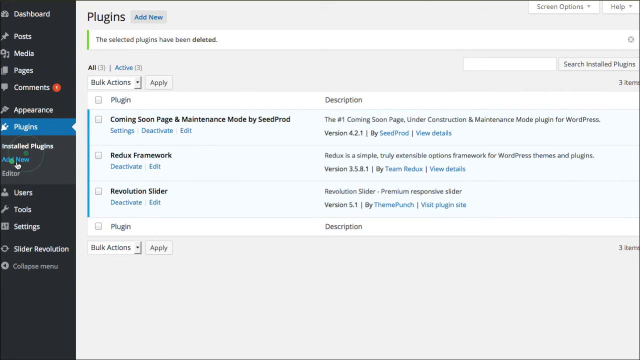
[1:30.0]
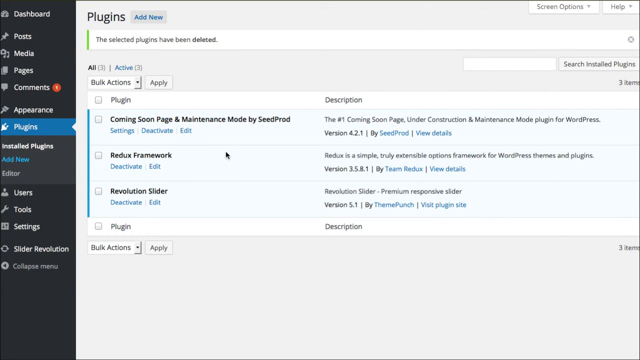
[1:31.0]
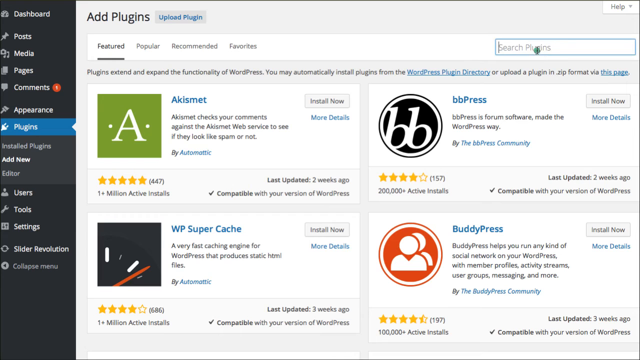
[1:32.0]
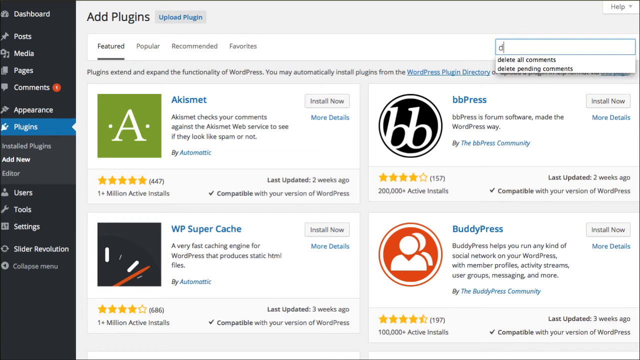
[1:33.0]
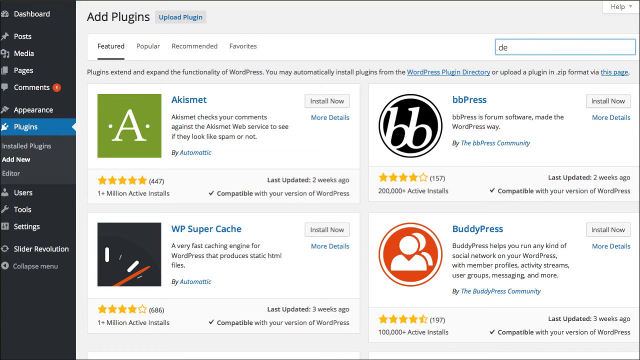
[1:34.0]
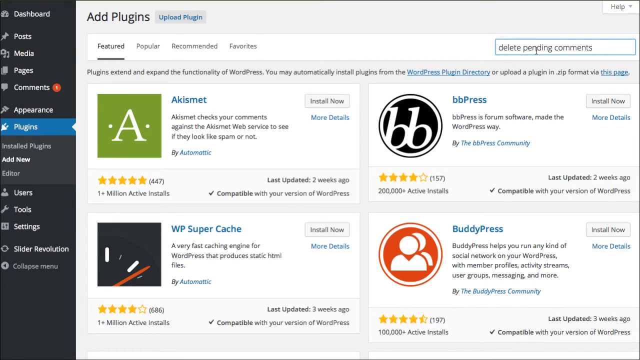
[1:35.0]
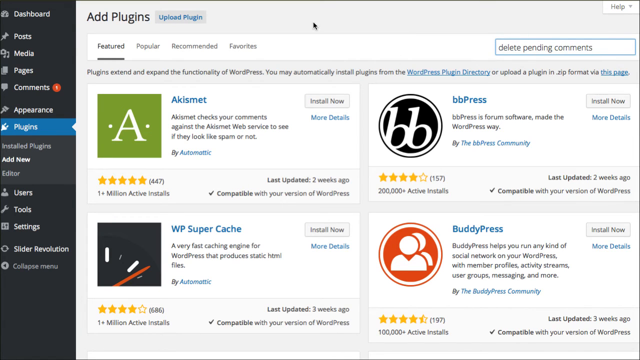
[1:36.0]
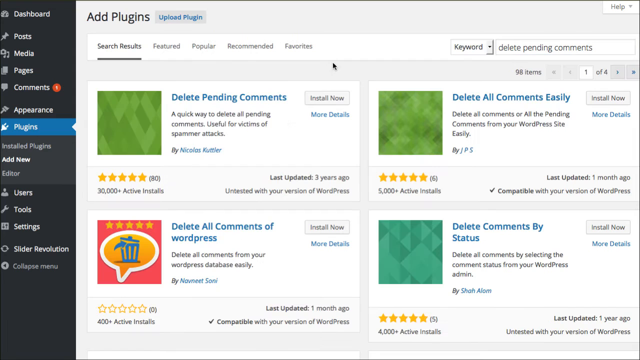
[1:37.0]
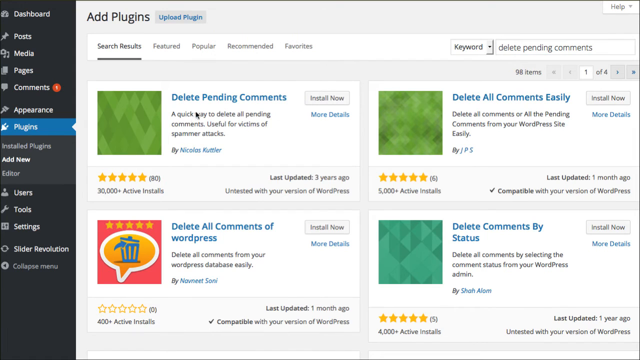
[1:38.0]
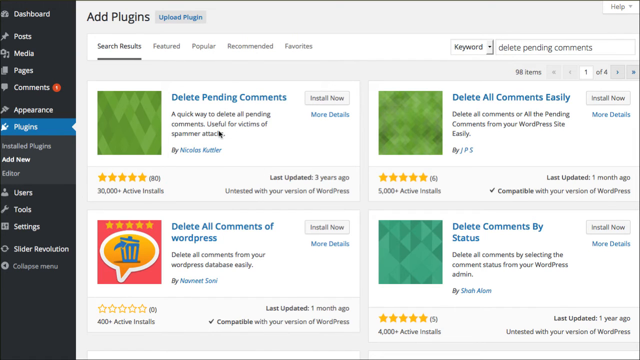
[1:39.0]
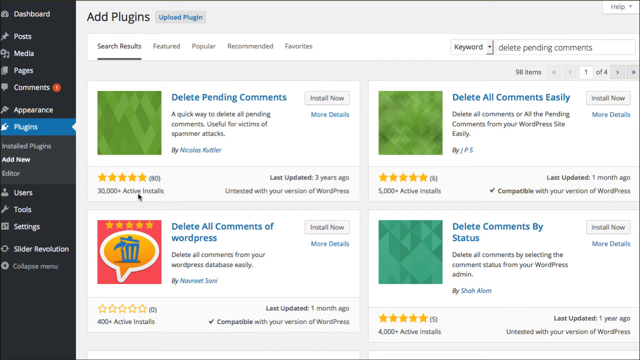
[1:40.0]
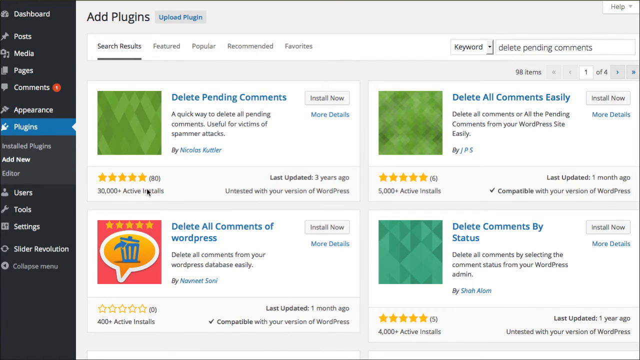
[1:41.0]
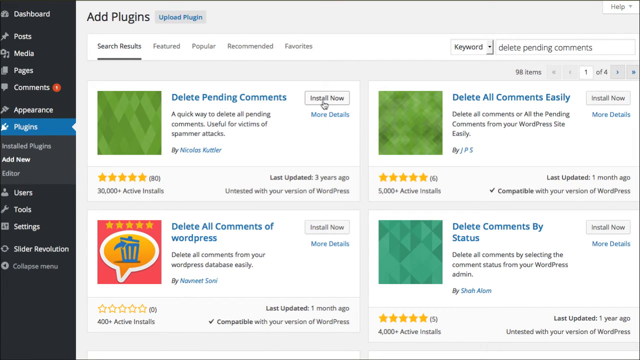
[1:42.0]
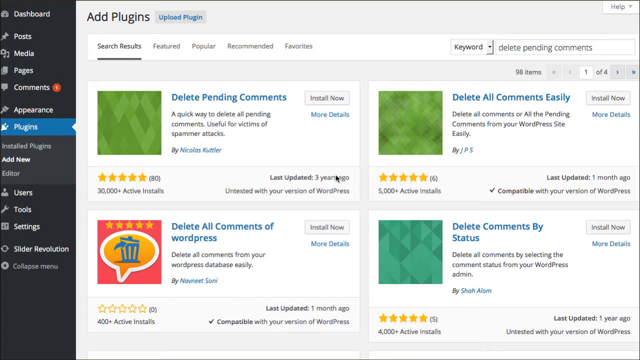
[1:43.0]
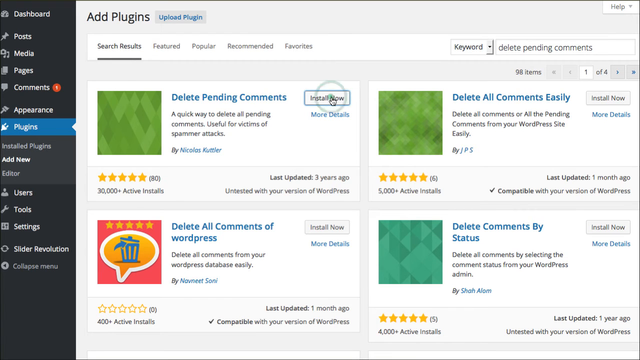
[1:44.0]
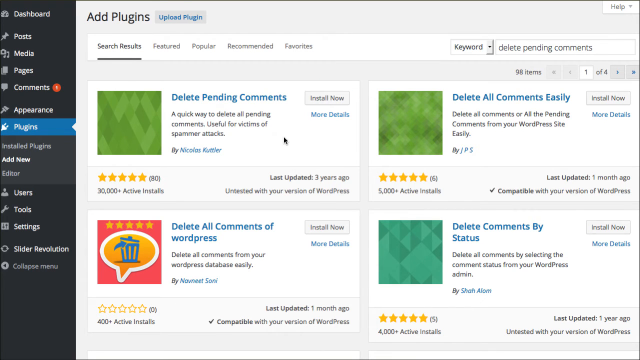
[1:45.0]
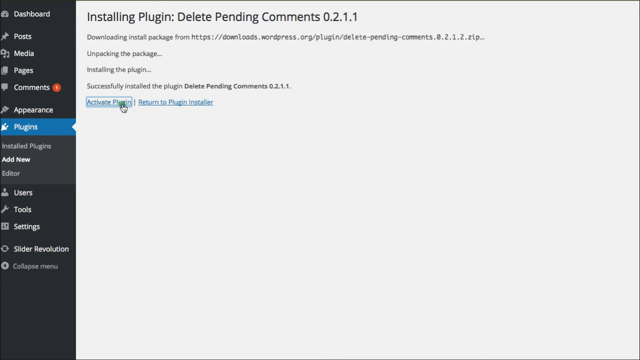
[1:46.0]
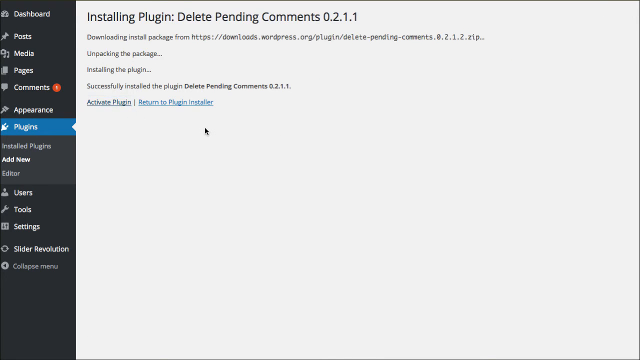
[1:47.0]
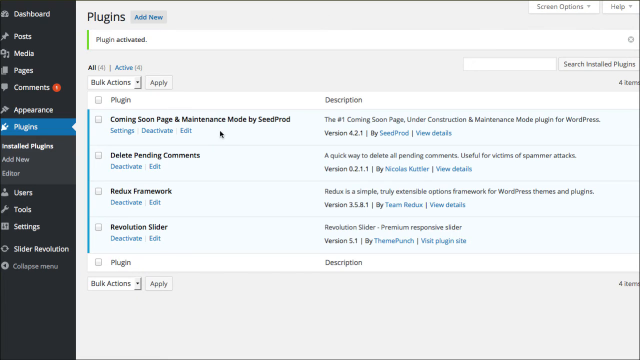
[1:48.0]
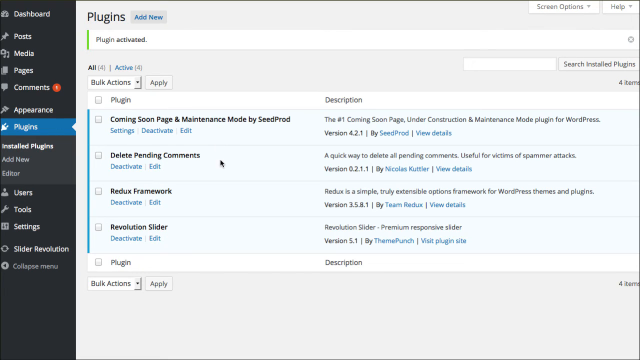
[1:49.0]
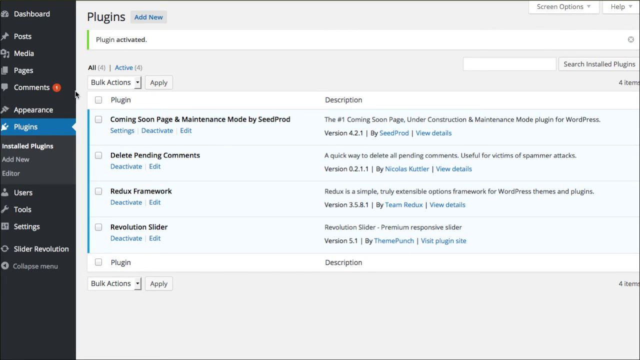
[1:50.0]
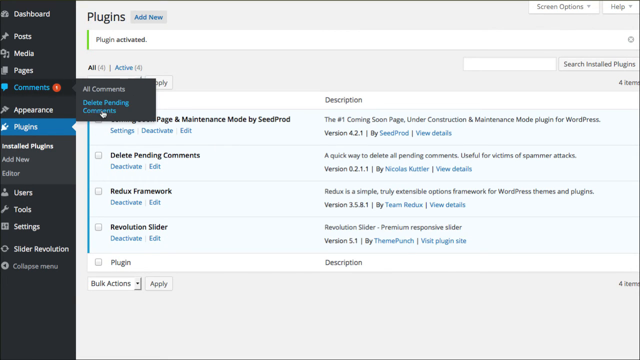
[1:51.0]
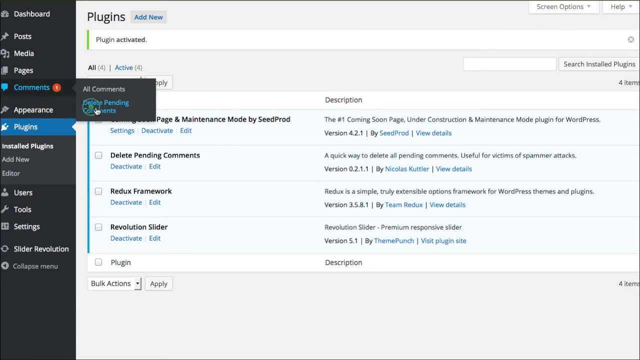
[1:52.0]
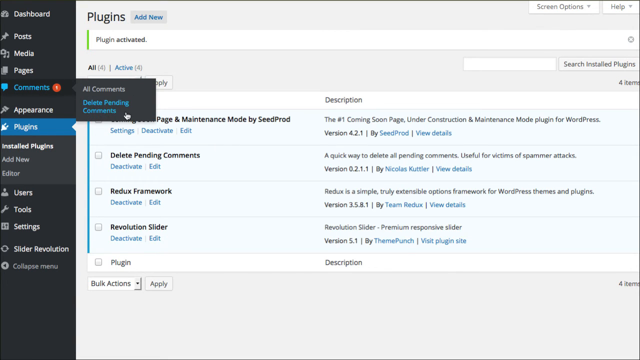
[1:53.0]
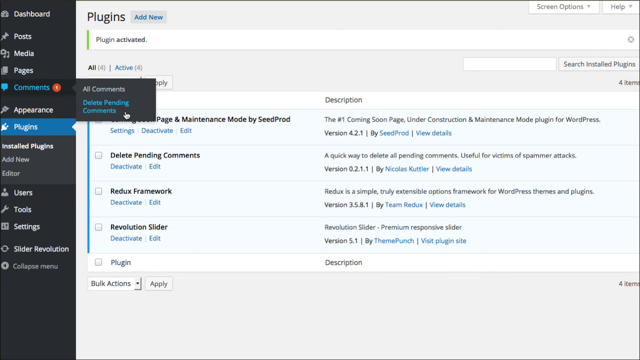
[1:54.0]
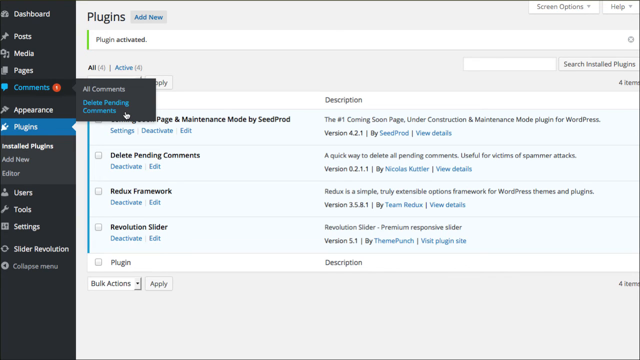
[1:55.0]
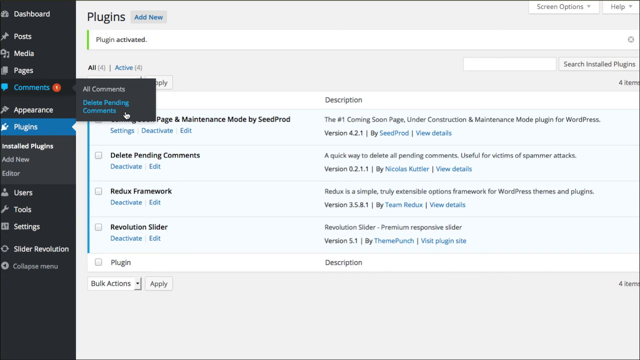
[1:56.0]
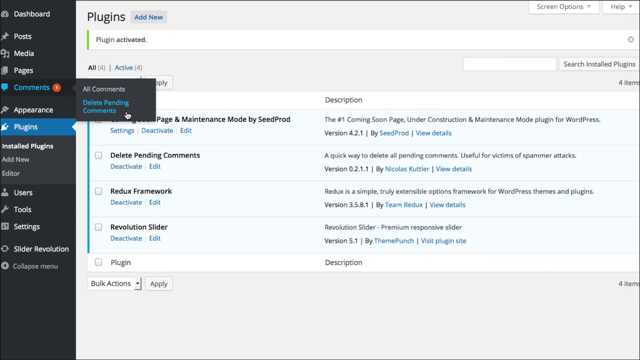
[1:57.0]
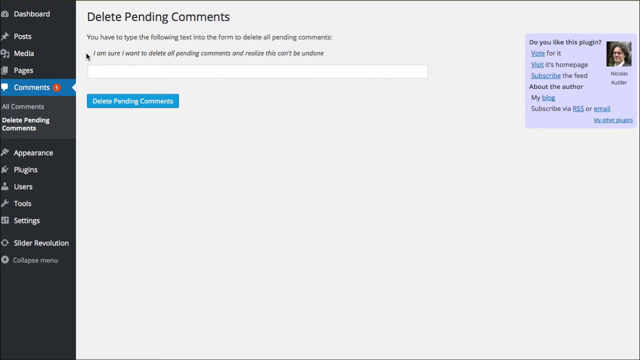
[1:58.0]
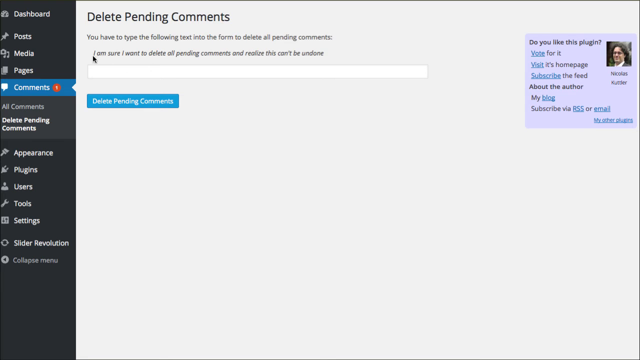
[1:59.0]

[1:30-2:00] The user has selected the Plugins button on the left side of the dashboard, and it is highlighted in blue. They click the Add New button, two lines of text below Plugins, then click Search Plugins and type in "Delete Pending Comments". In the top left corner of the white screen, a green box appears with blue text next to it reading "Delete Pending Comments. A quick way to delete a pending comment is useful for victims of spammer attacks." The plugin shows 30,000 active installs and a 5-star rating with 80 reviews. The user clicks install now, and a white screen appears with black text reading "Install plugin, delete pending comments, 0.2.1.1". The user clicks a blue button that says "Activate Plugin", and a plugin screen appears that says "Plugin Activated". The user moves the mouse left to the dashboard, where a red circle with a white number 1 is next to the comments button. Hovering over it shows "all comments" and "delete pending comments". The user clicks delete pending comments, which leads to a white page with black text reading "Delete pending comments. You have to type the following text into the form to delete all pending comments. I am sure I want to delete all pending comments and realize this can't be undone." The user begins to highlight the text.